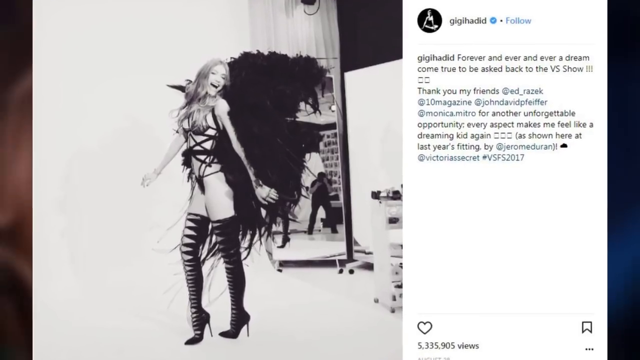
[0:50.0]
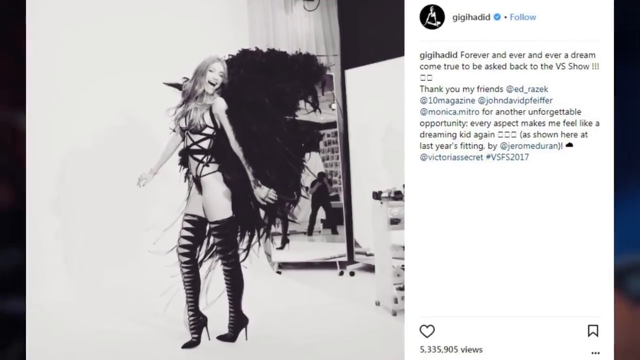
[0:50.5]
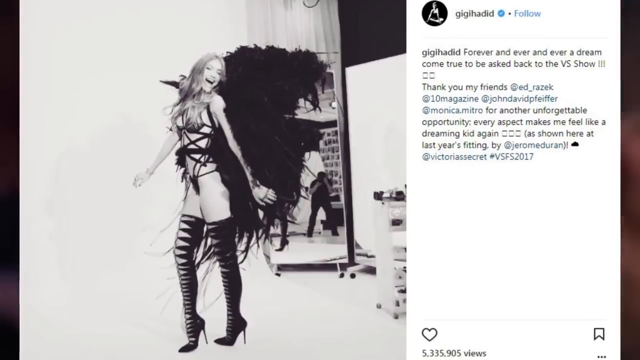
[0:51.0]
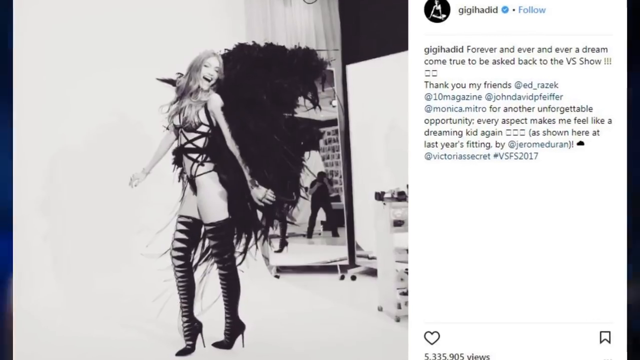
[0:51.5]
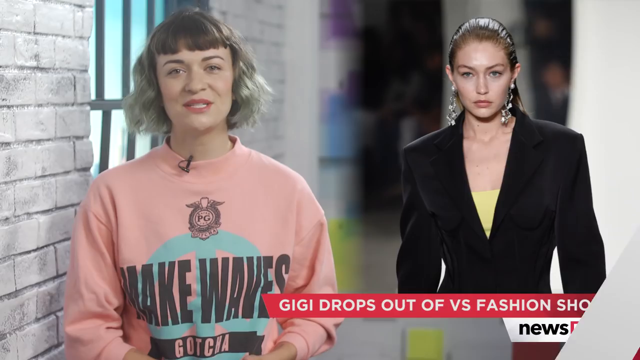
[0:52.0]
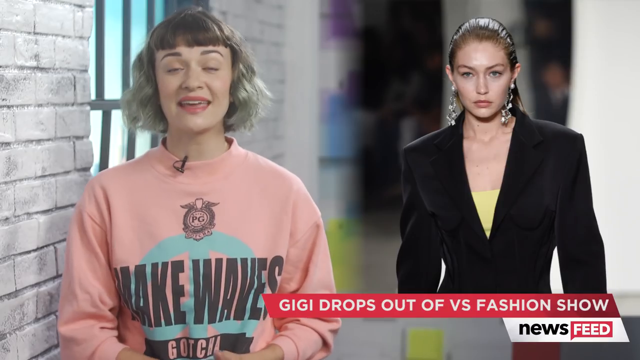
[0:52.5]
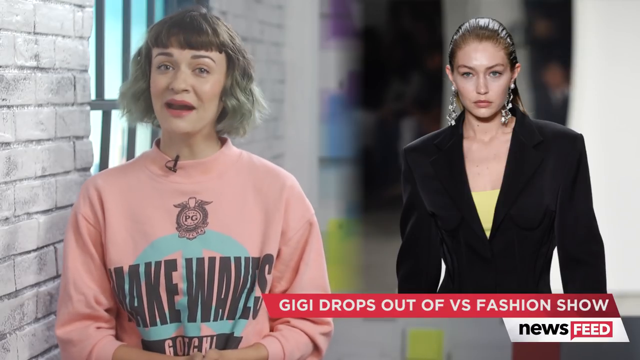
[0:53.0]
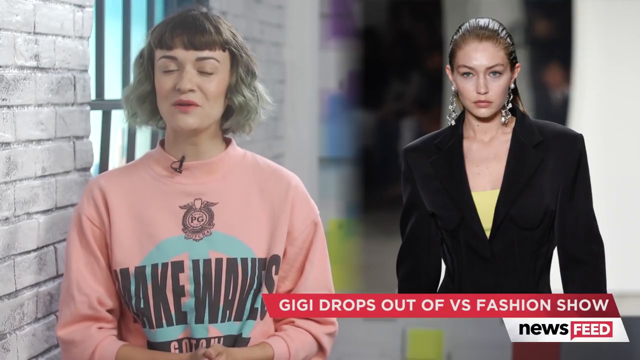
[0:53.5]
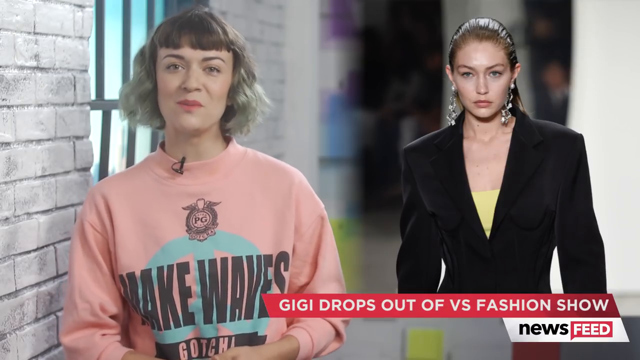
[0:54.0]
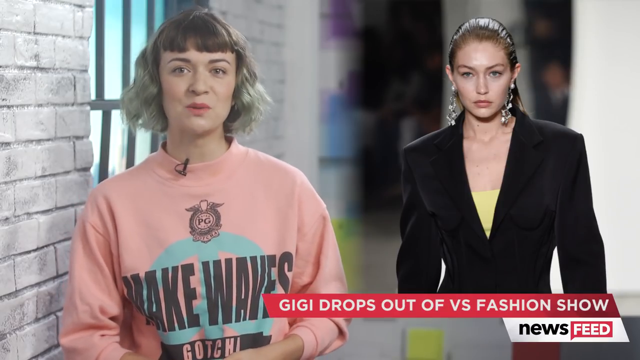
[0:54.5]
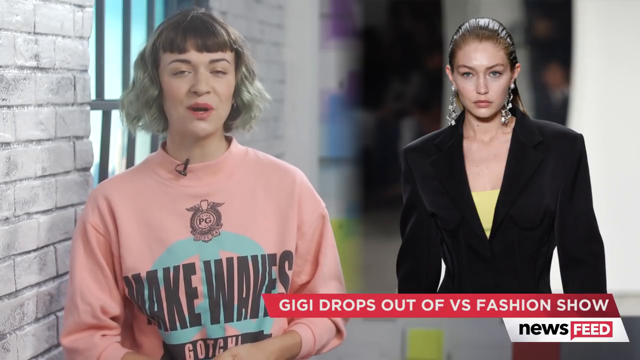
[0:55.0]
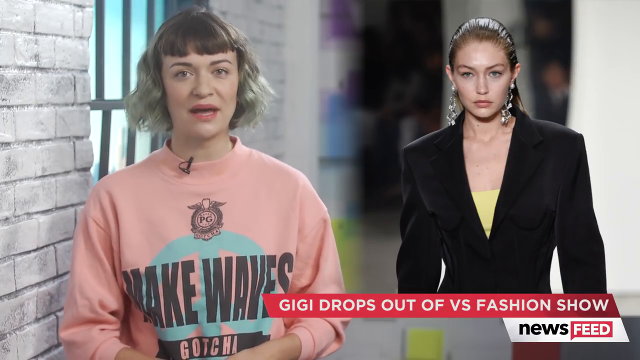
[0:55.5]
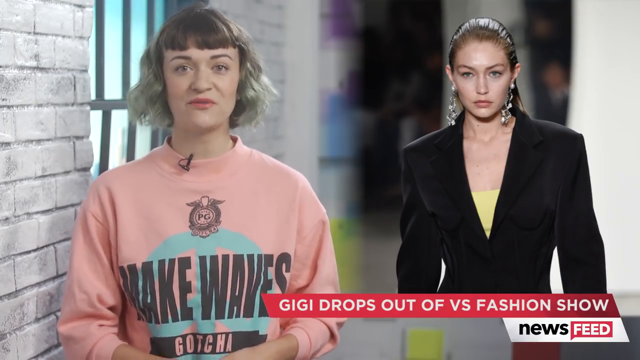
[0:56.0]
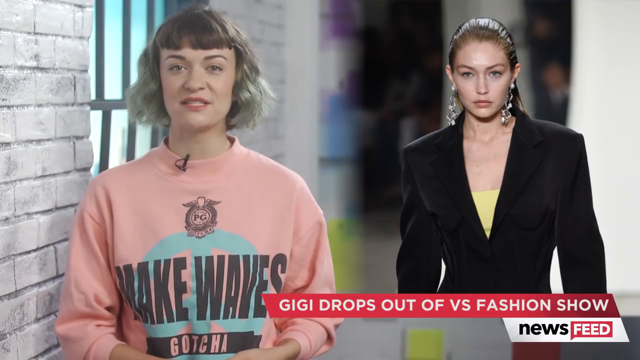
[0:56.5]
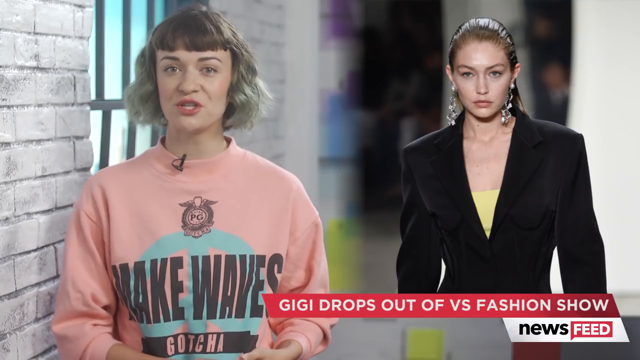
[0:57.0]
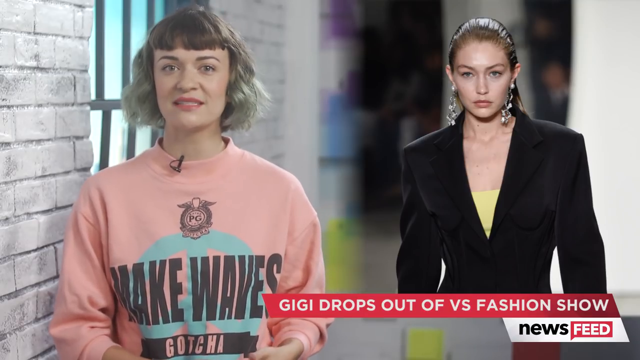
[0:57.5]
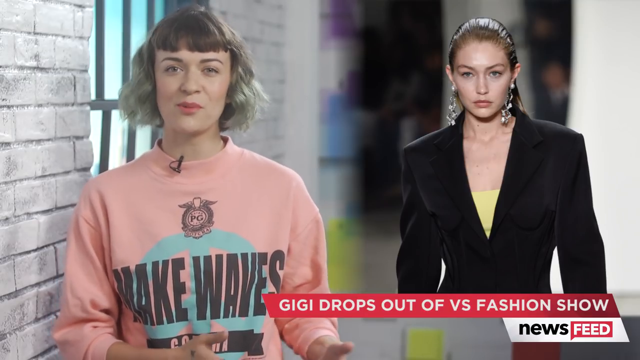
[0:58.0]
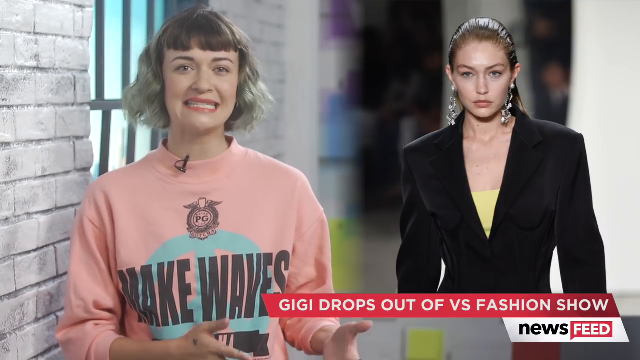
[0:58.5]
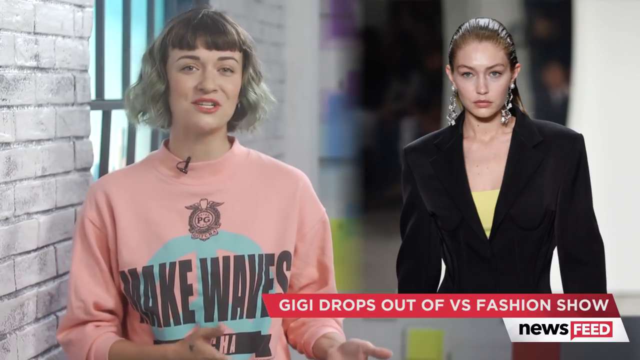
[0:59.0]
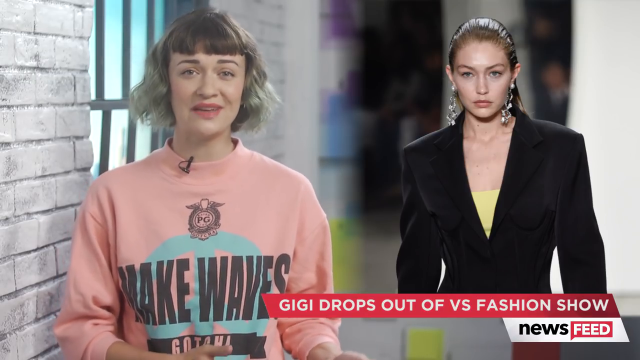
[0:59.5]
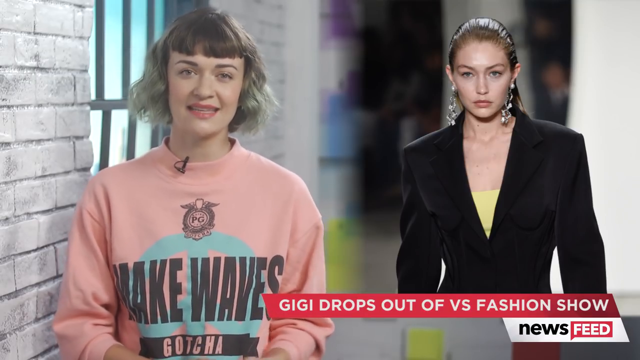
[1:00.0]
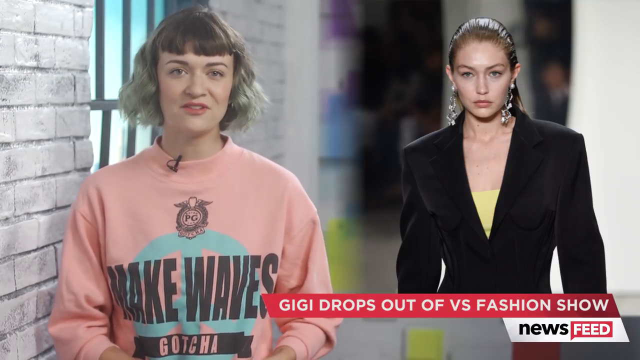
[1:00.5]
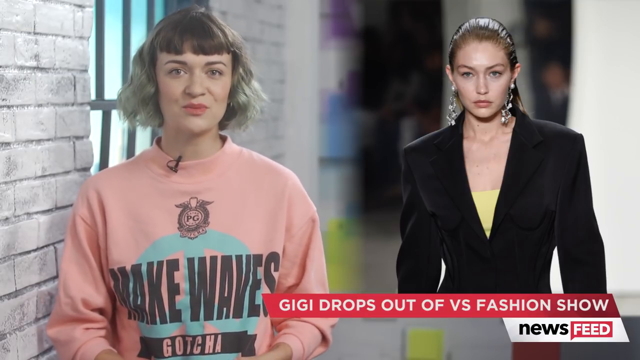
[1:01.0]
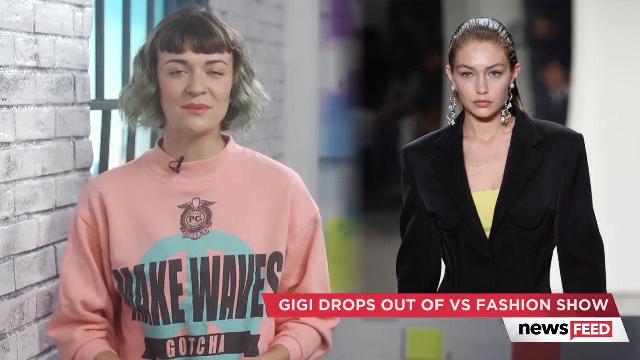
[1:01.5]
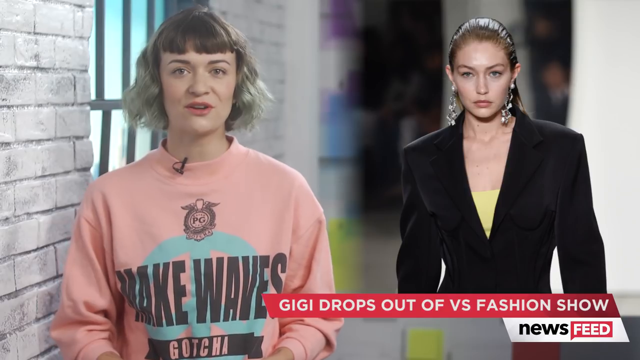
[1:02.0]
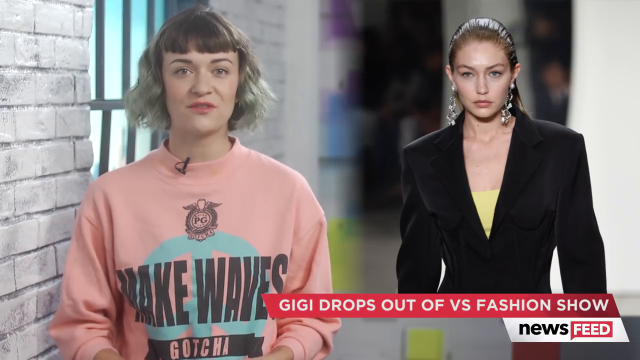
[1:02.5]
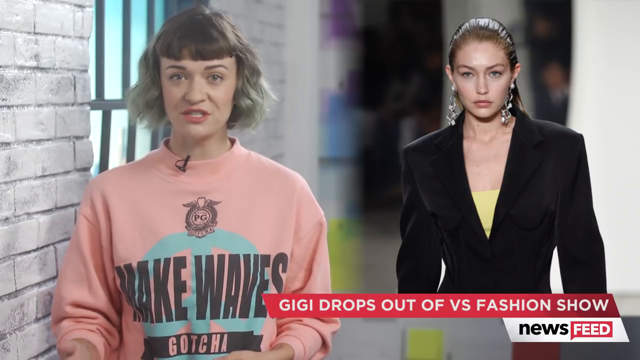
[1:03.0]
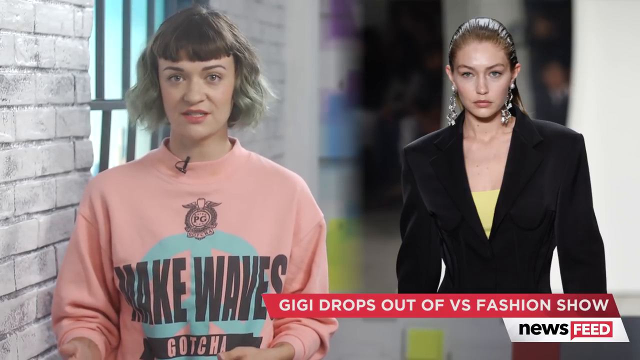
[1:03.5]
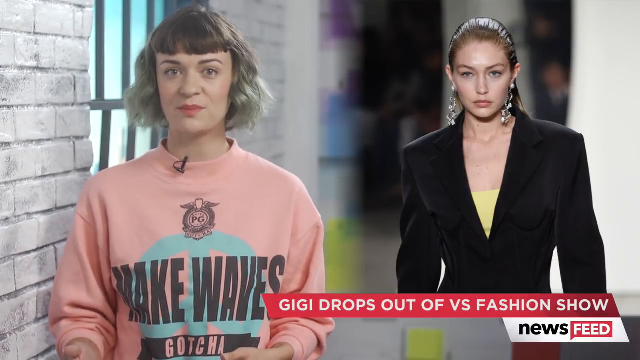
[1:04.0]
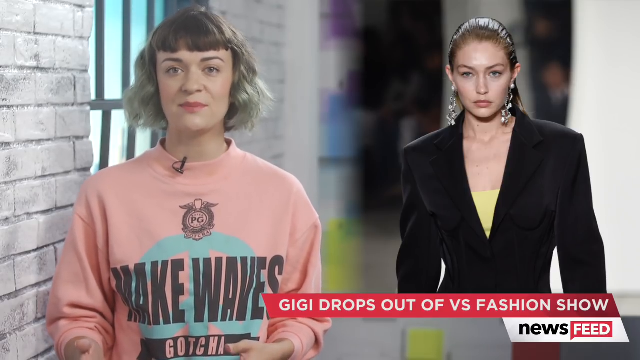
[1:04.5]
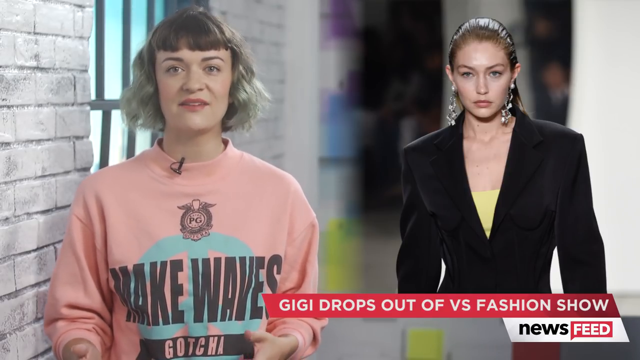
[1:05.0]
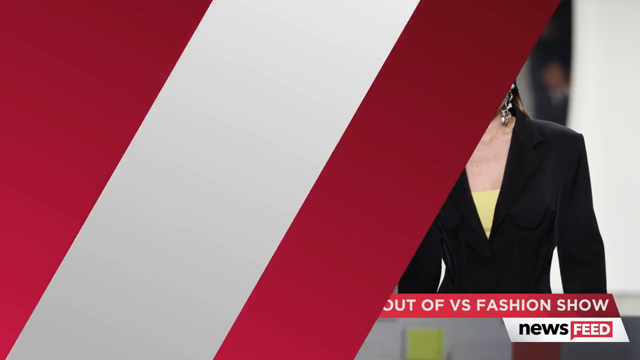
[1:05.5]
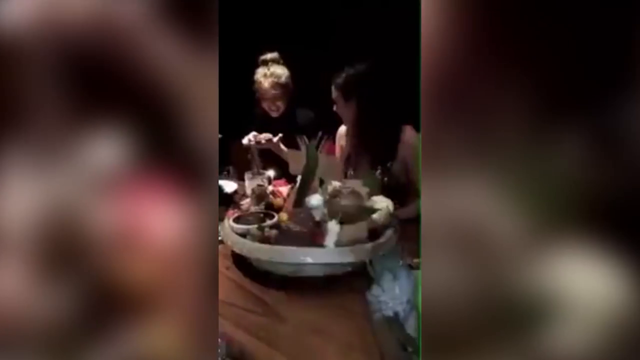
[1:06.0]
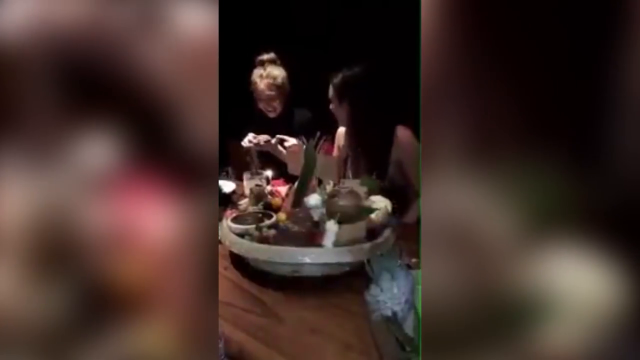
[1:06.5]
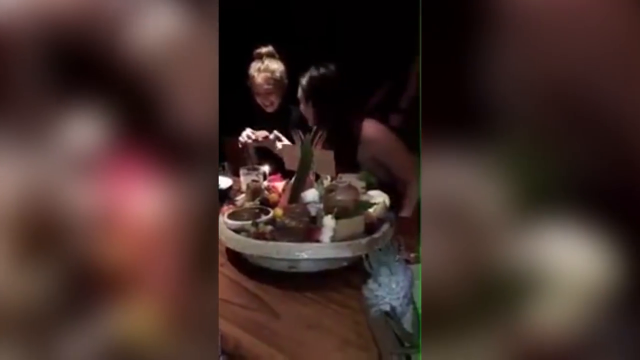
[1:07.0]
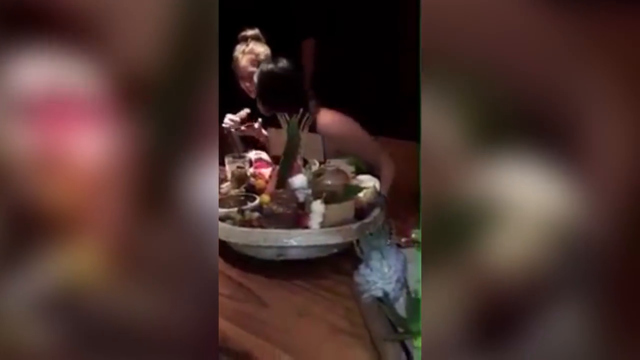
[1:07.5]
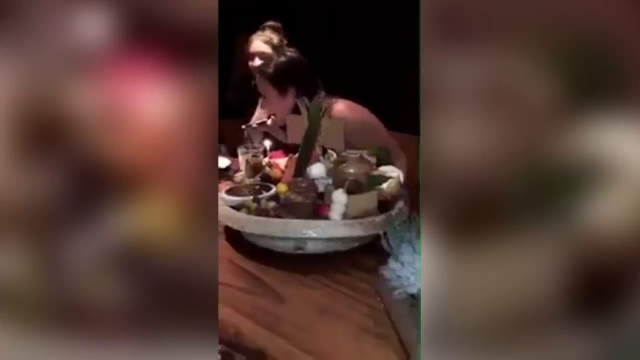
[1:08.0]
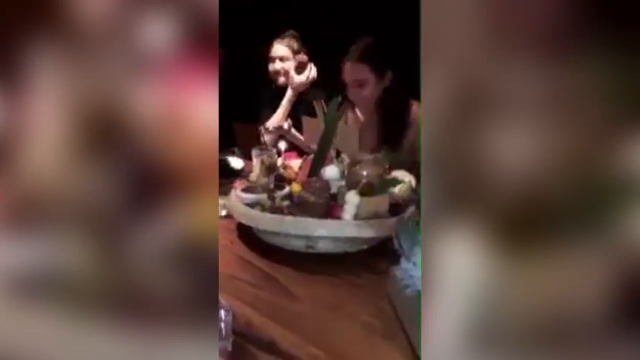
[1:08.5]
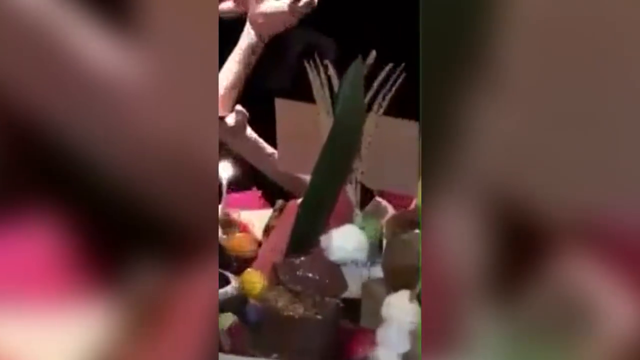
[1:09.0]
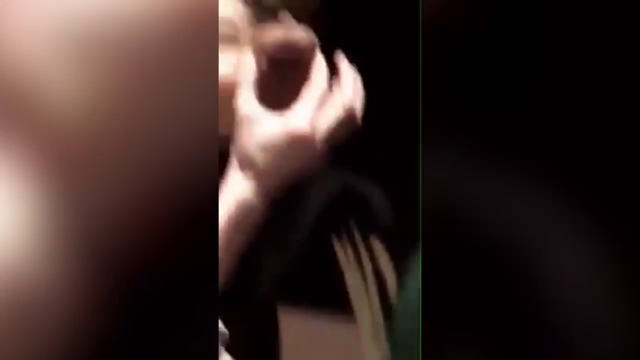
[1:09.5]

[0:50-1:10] The Gigi Hadid social media post shows a heart and a bookmark icon at the bottom. The camera zooms in, and the shot switches back to the woman in the sweatshirt, still on the left side, with a white brick wall next to her and a window behind her. On the right is an image of the model wearing a black suit with a yellow shirt underneath; her hair is pulled back tightly, the back of her head is very glossy, and she looks down with a stern expression. The woman on the left keeps talking, moving her head back and forth a little and wiggling her hands and arms slightly, but mostly standing still with only her mouth moving. The video then switches to a dark video of two people sitting next to a table with a big, shallow white container holding a number of food items.